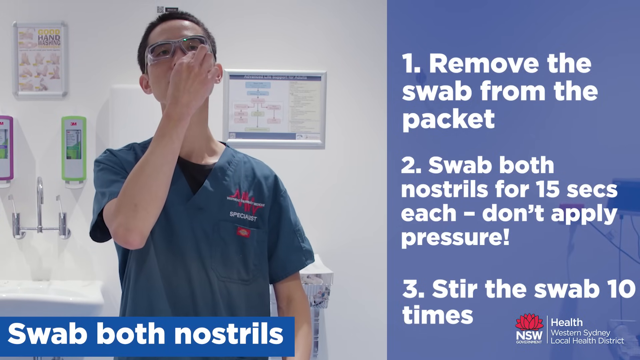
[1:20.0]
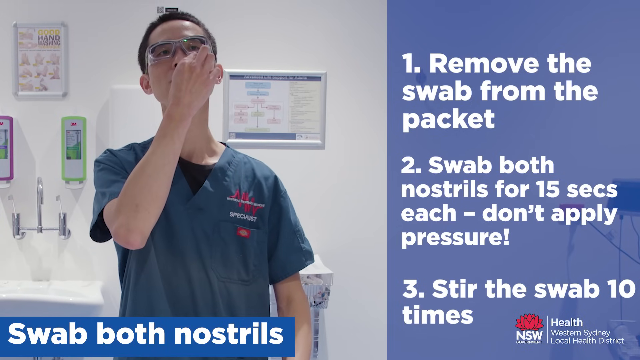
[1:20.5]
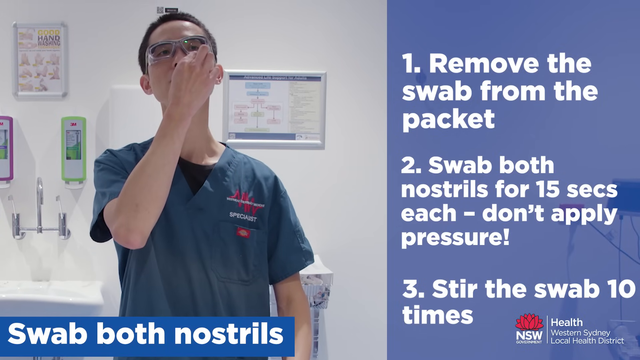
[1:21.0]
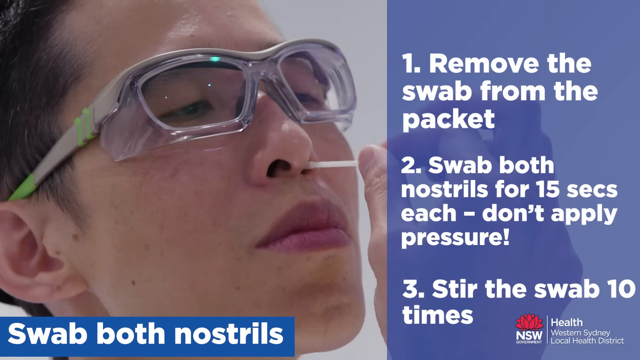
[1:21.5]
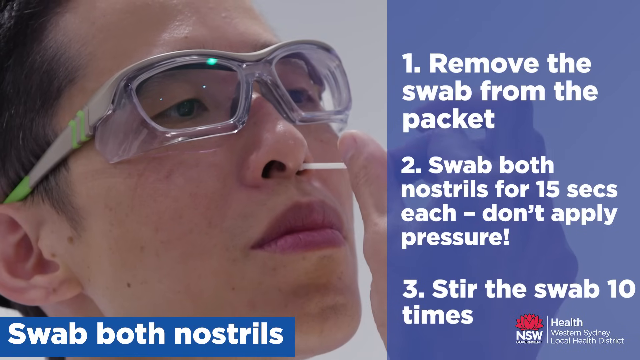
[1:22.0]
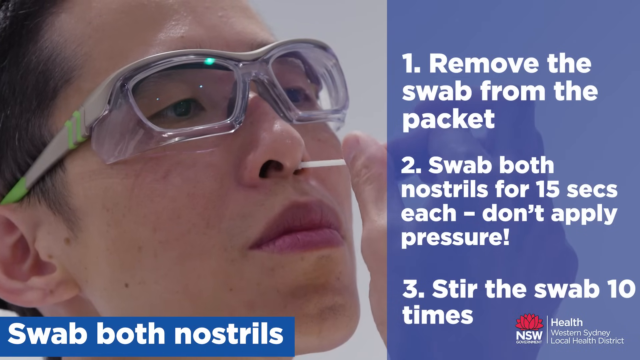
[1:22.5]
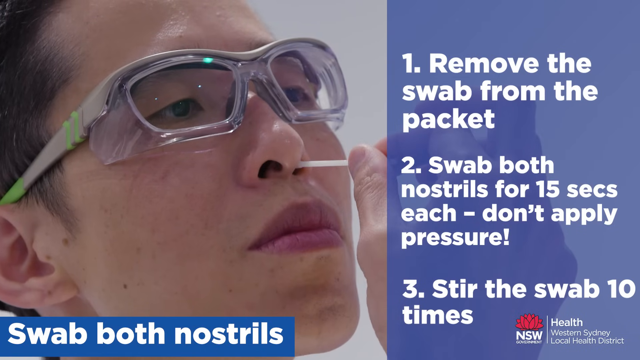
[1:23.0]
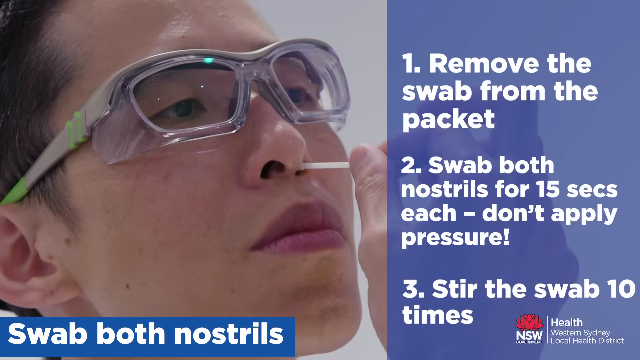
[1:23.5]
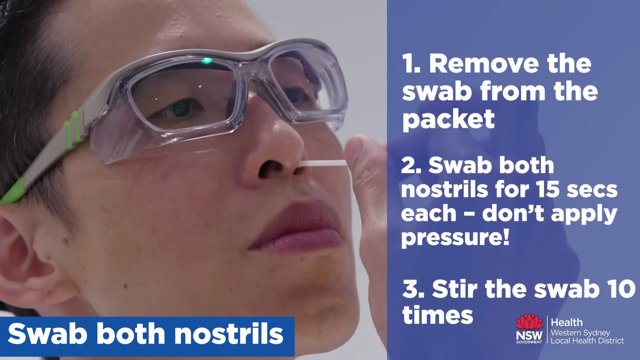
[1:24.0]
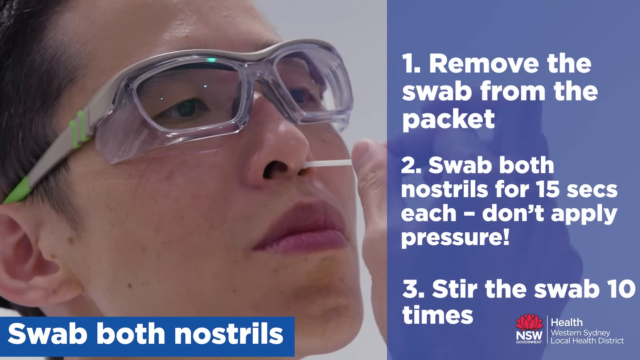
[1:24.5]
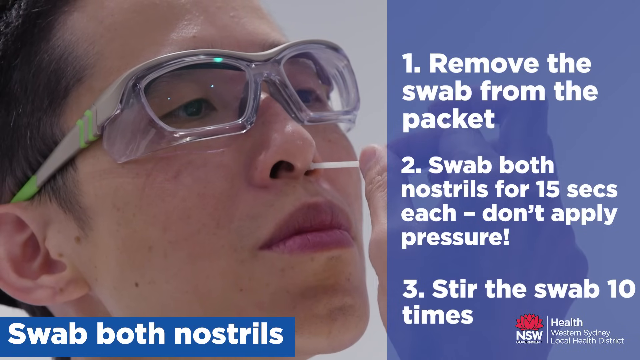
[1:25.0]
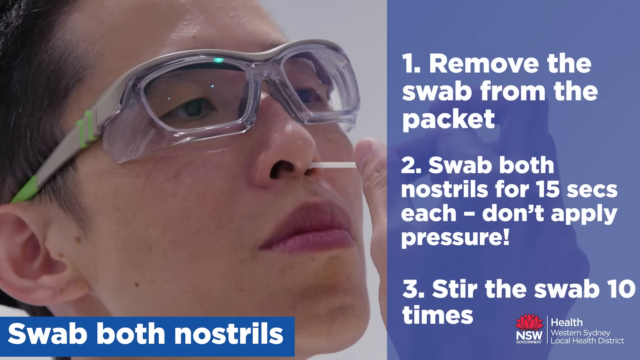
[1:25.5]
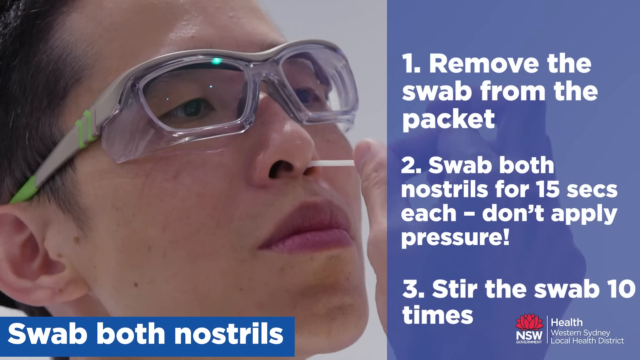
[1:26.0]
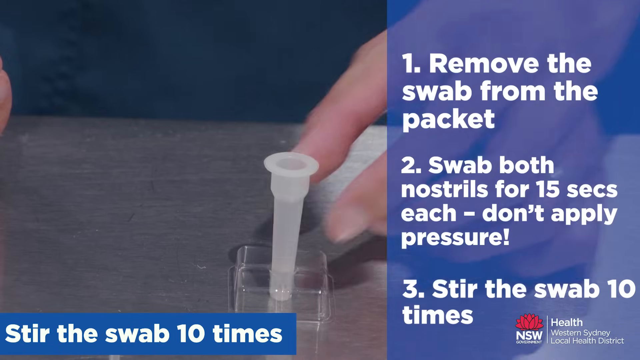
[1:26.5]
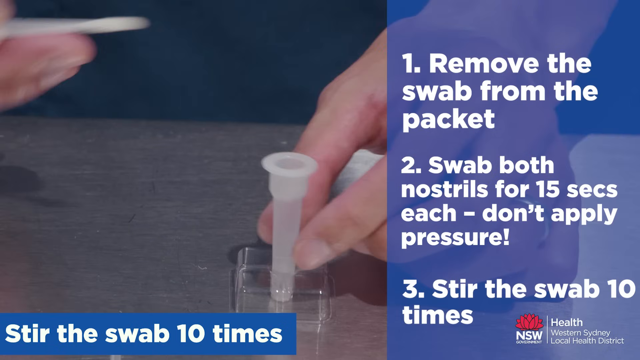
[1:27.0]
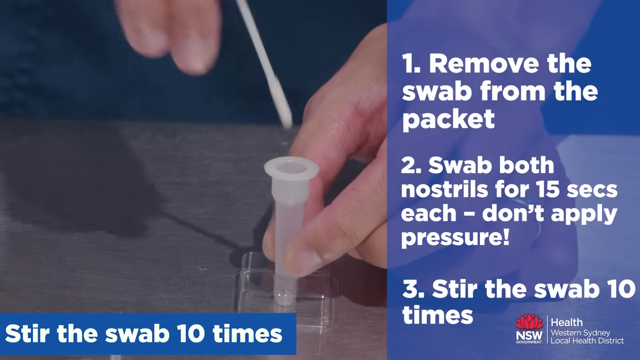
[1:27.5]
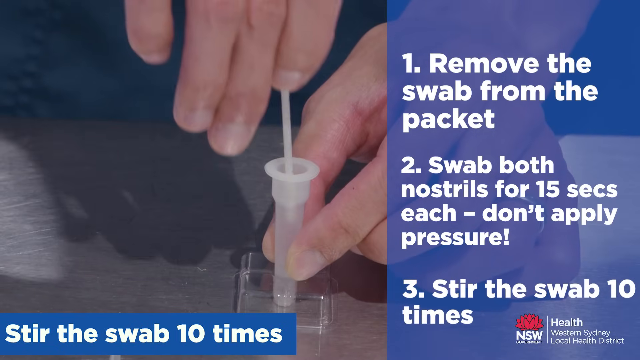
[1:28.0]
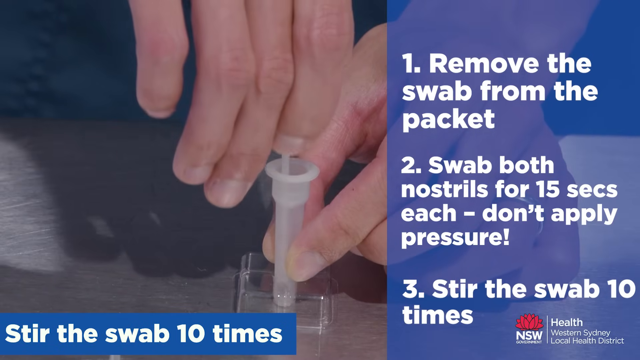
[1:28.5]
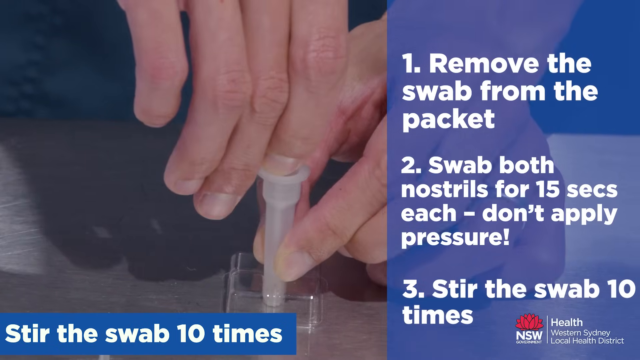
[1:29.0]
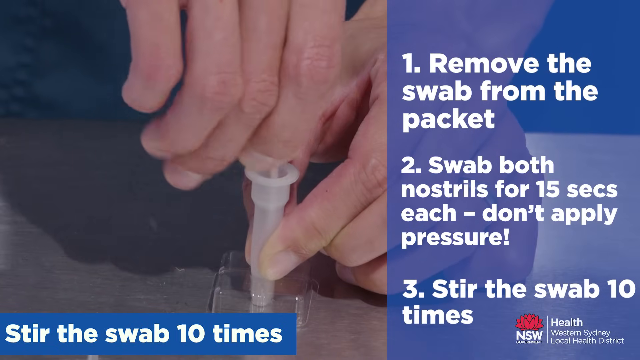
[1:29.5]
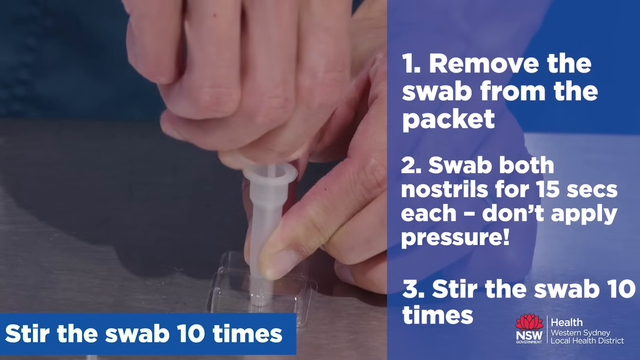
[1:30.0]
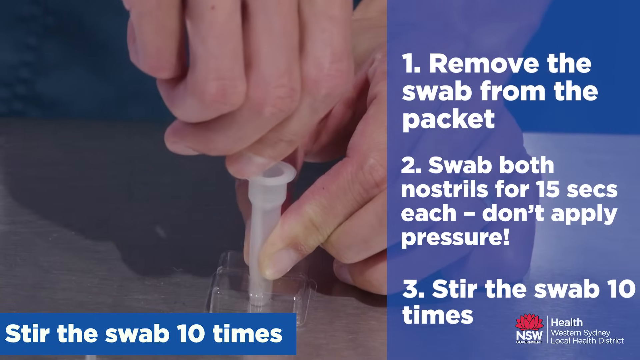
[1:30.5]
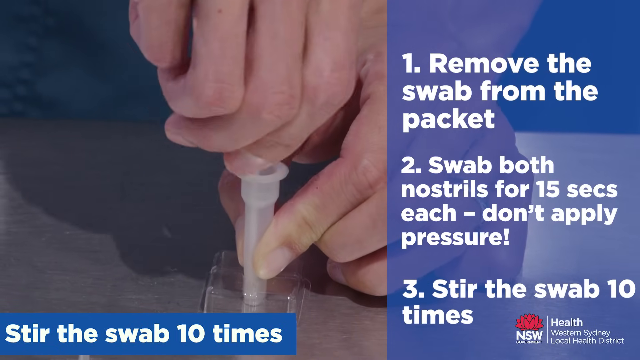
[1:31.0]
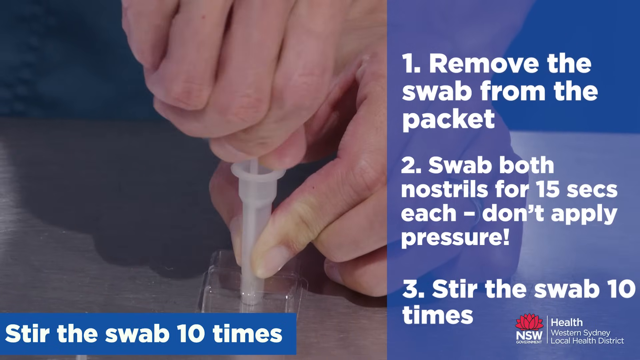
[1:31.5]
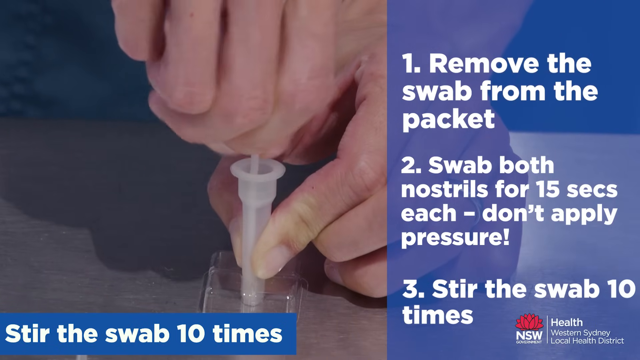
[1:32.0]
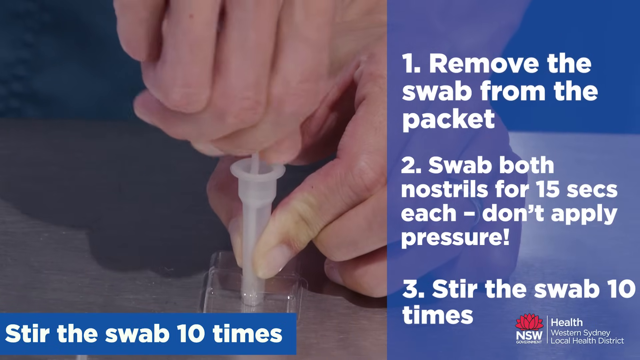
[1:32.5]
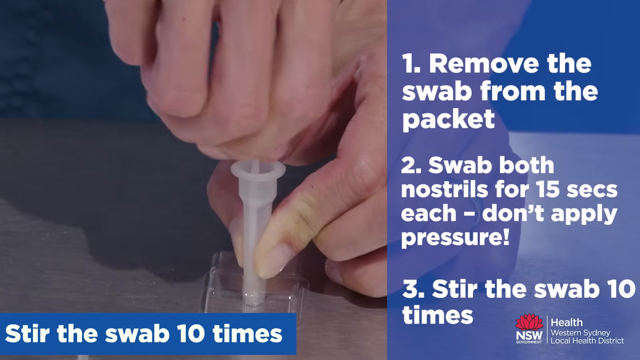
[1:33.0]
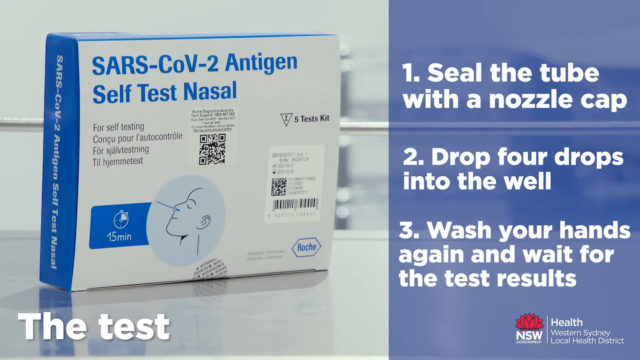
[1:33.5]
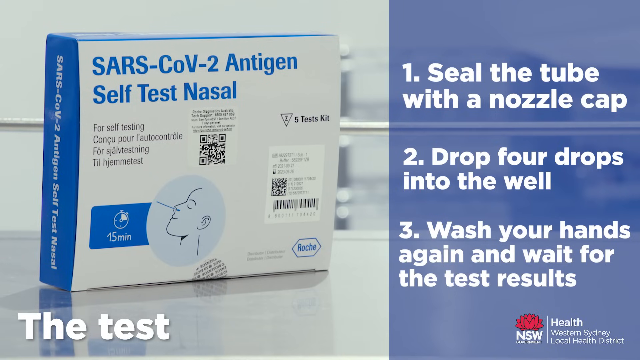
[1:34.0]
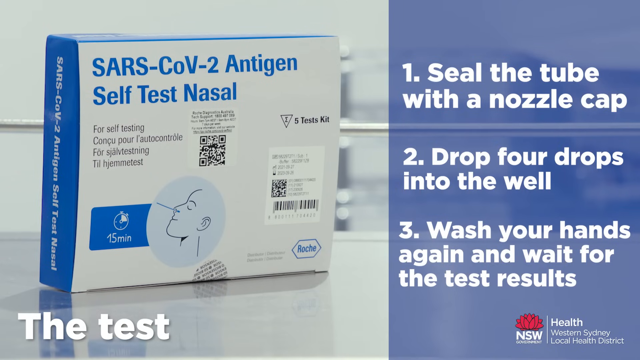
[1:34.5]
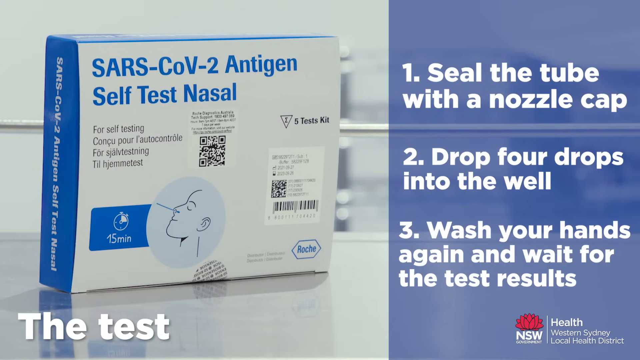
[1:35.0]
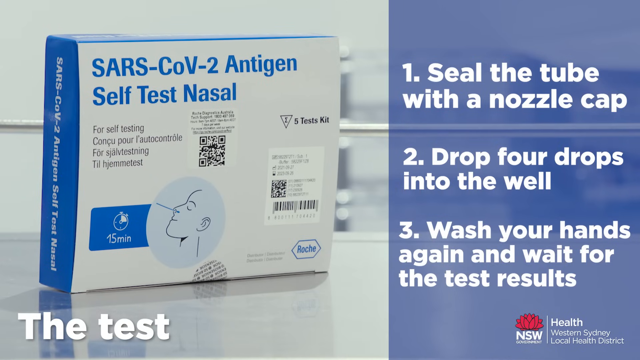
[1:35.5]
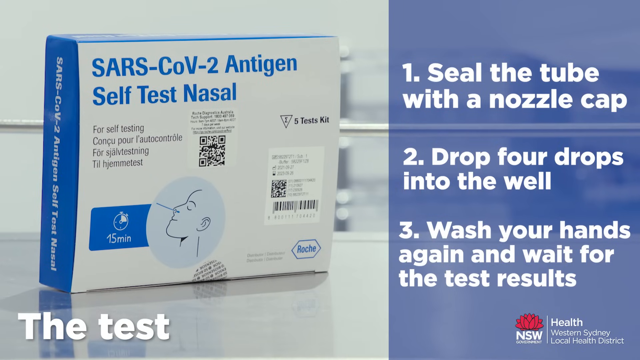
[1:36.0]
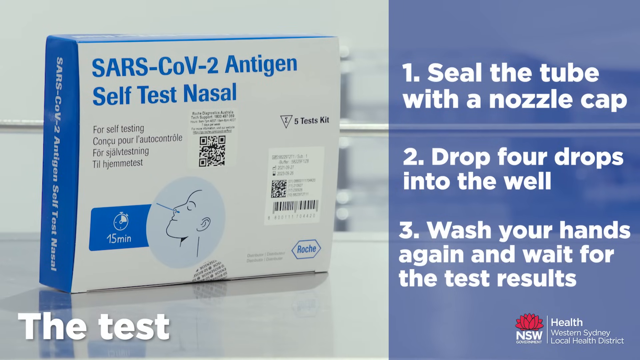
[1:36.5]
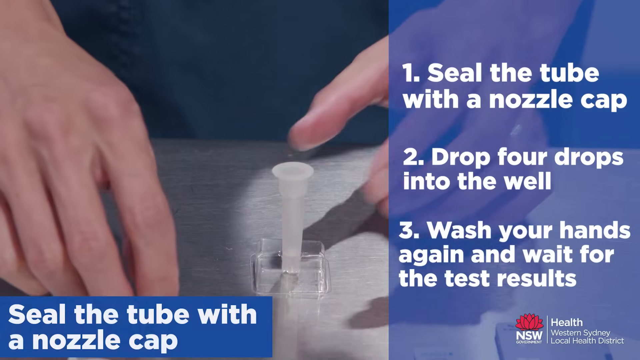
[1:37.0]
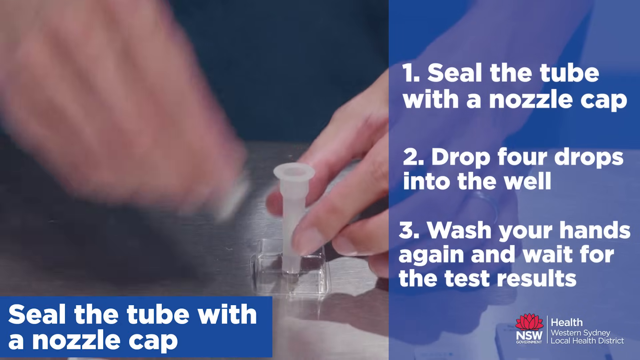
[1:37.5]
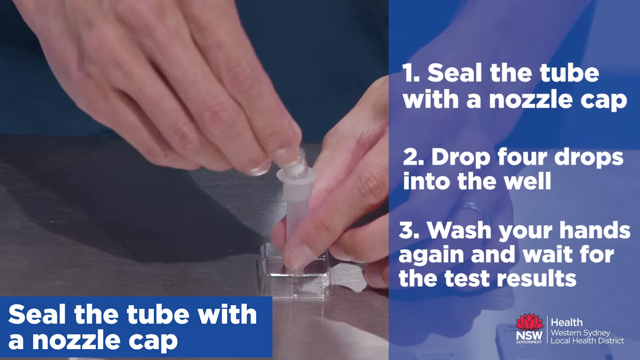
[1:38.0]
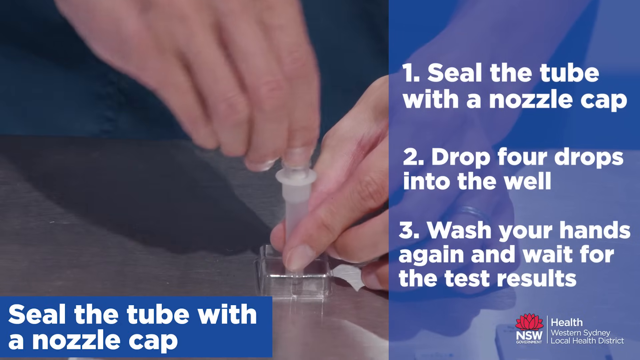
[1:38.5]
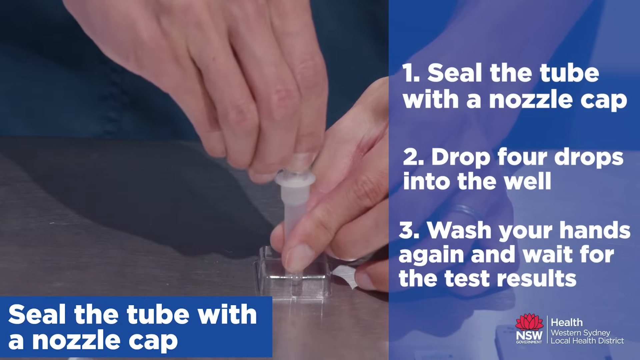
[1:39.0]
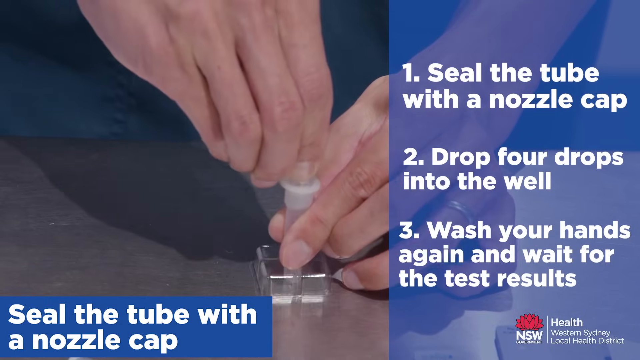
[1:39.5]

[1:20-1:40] A man wearing goggles is in some kind of clinical room. He takes out a swab and sticks it up his nose, rolling the swab between his fingers. Text on the right side of the screen reads "remove the swab from the packet. Swab both nostrils for 15 seconds each. Don't apply pressure. Stir the swab 10 times." He takes the swab out and sticks it in the tube he has prepared and put in the stand on the metal table, then swishes the swab around. He wears a teal scrub outfit with the name "Kenny" on the top and a red and white logo on the right of the scrub top. The instructions then read "seal the tube with nozzle cap, drop four drops into the well, and wash your hands again and wait for the test results."